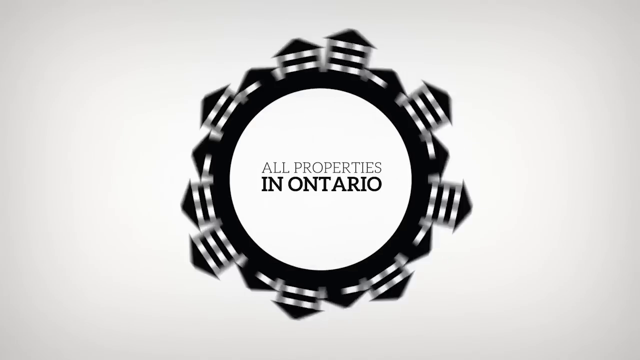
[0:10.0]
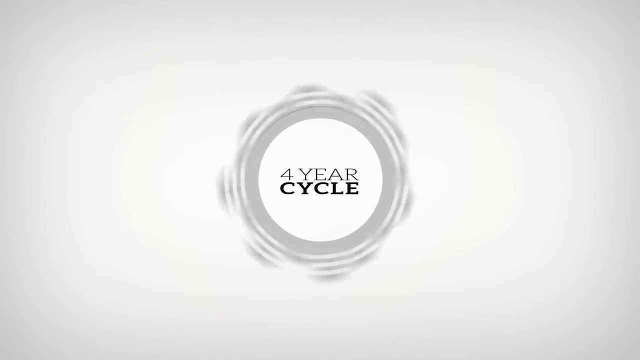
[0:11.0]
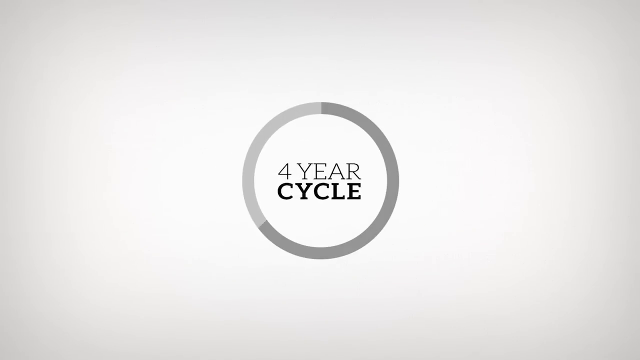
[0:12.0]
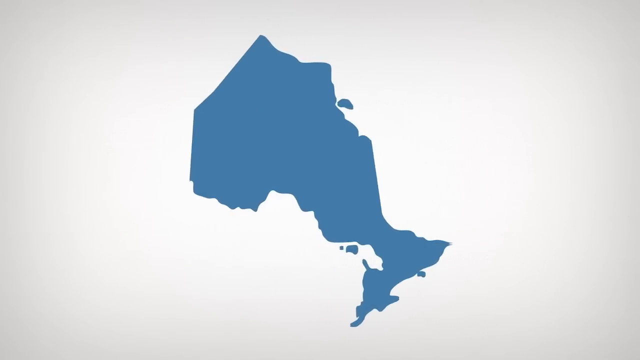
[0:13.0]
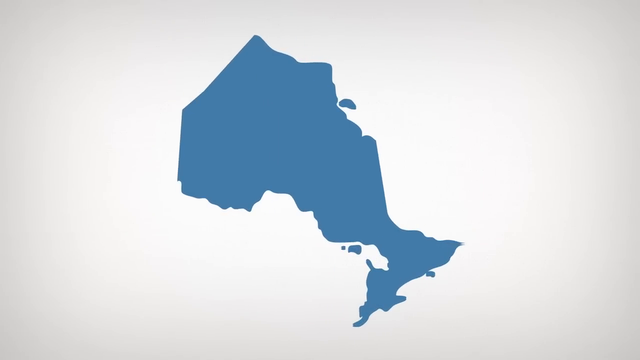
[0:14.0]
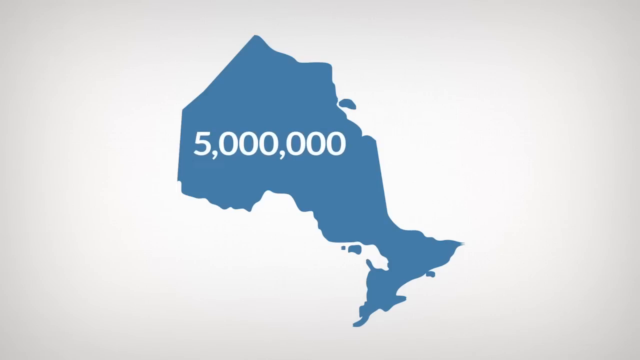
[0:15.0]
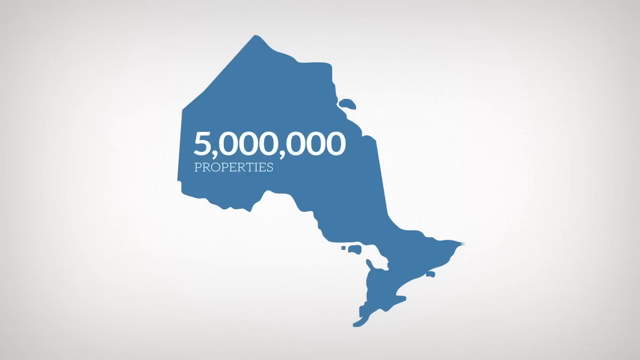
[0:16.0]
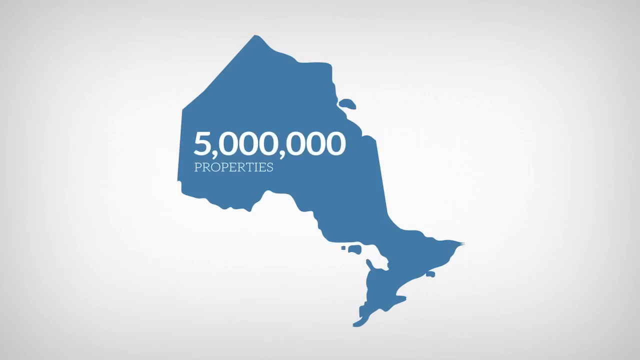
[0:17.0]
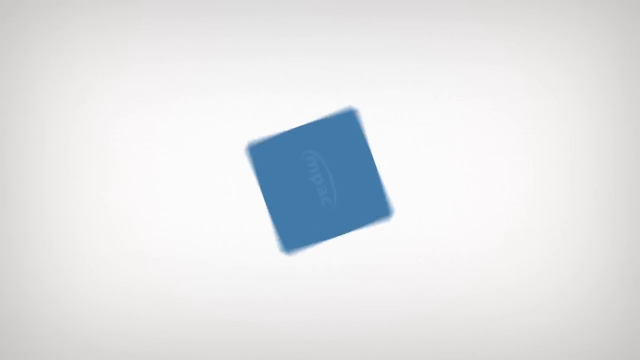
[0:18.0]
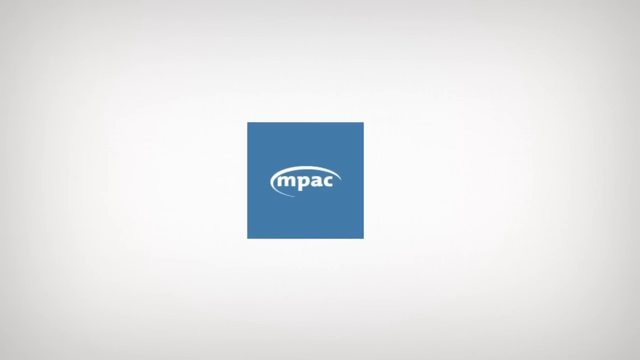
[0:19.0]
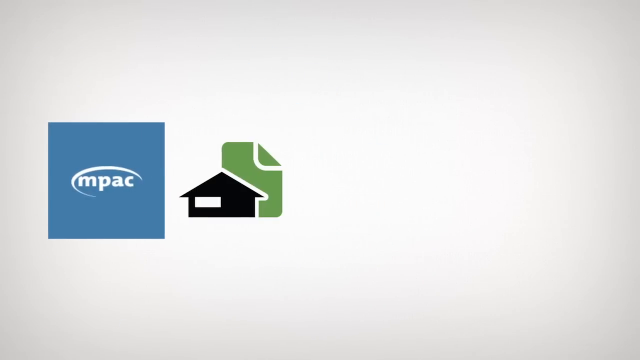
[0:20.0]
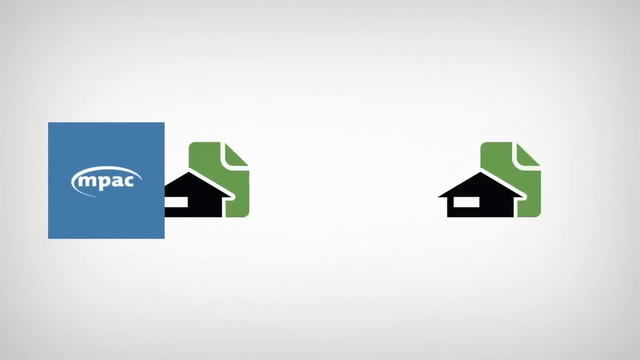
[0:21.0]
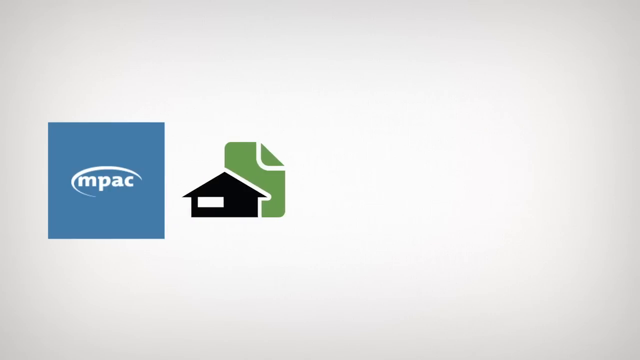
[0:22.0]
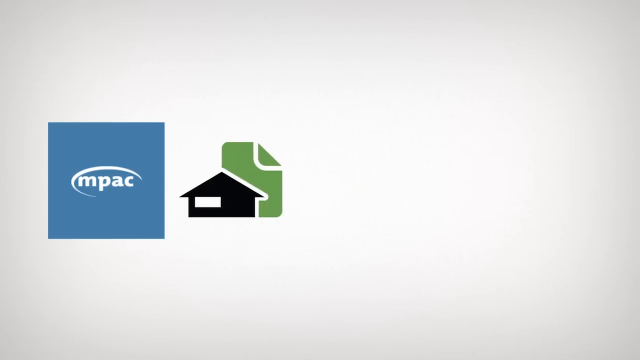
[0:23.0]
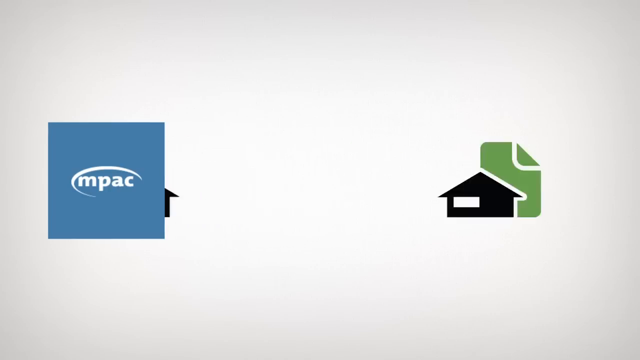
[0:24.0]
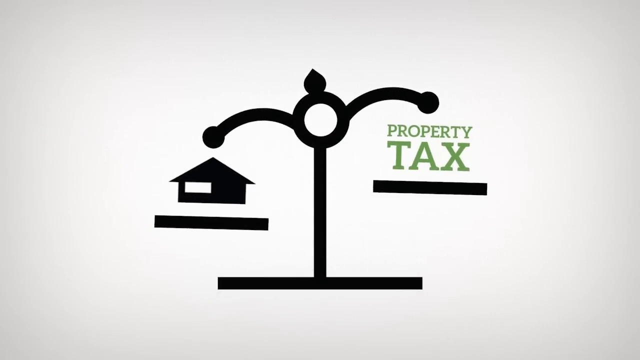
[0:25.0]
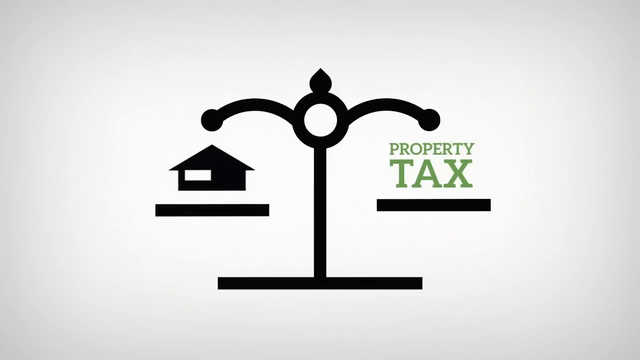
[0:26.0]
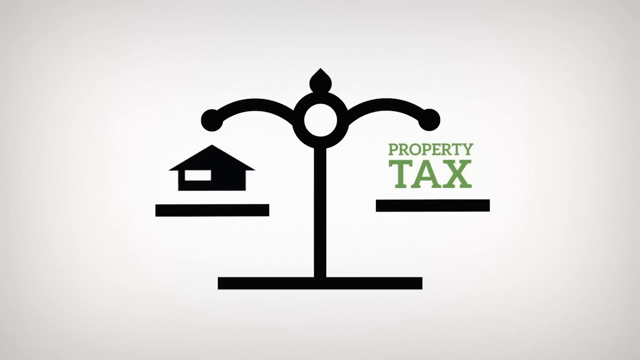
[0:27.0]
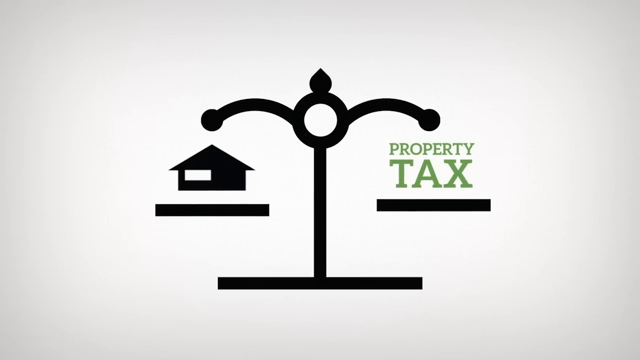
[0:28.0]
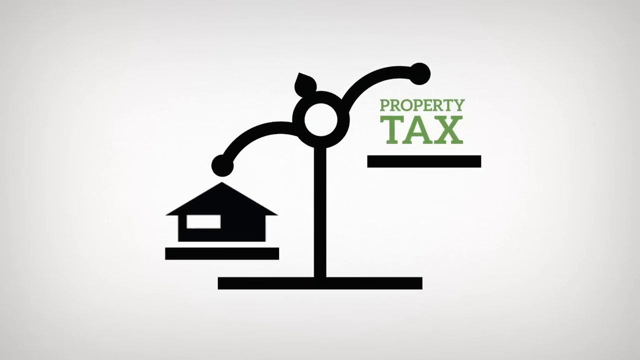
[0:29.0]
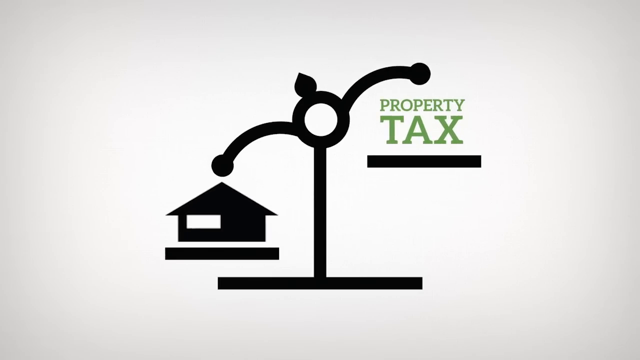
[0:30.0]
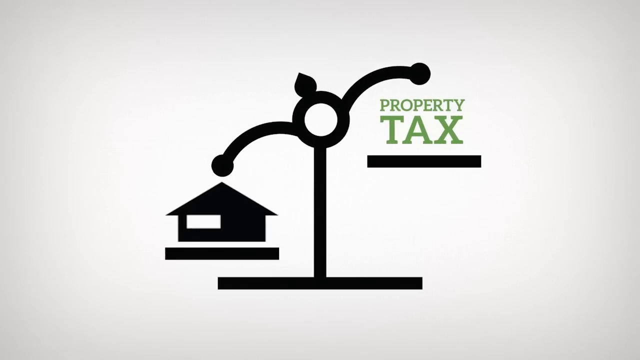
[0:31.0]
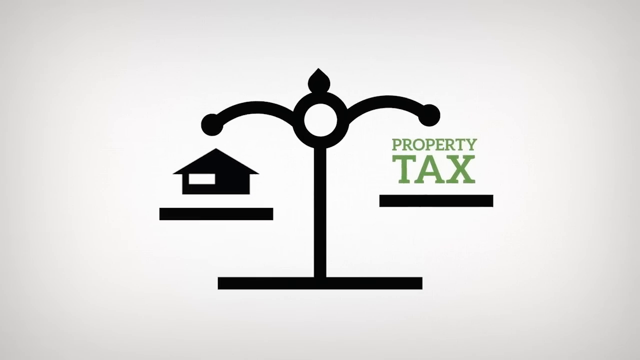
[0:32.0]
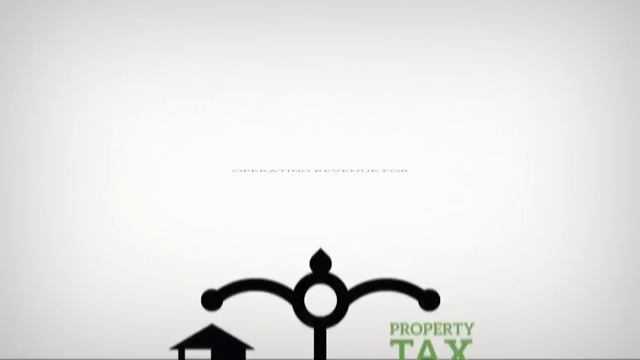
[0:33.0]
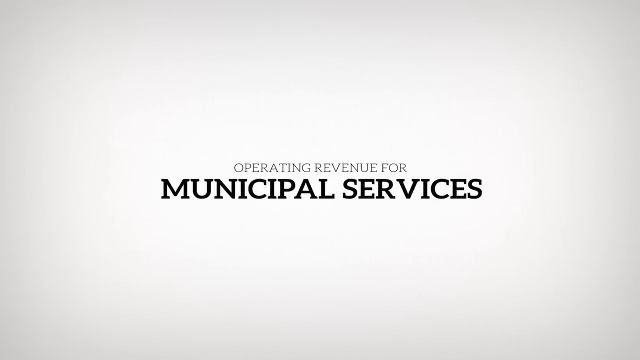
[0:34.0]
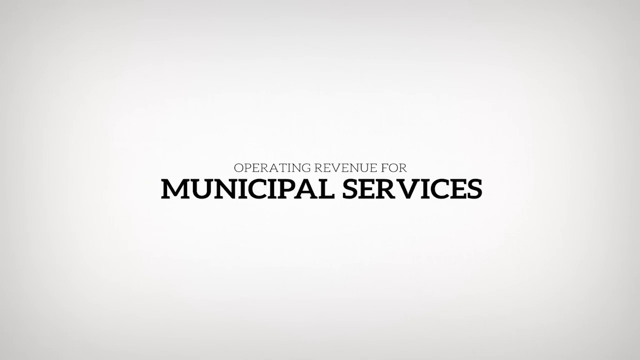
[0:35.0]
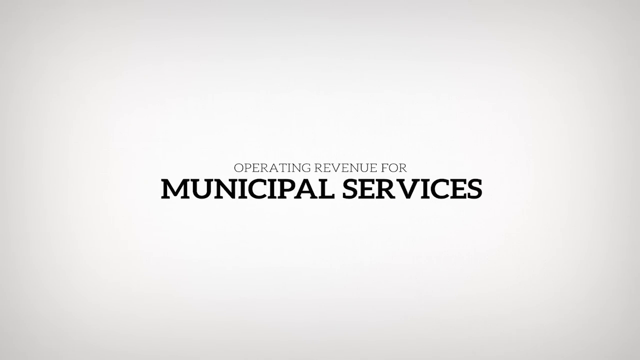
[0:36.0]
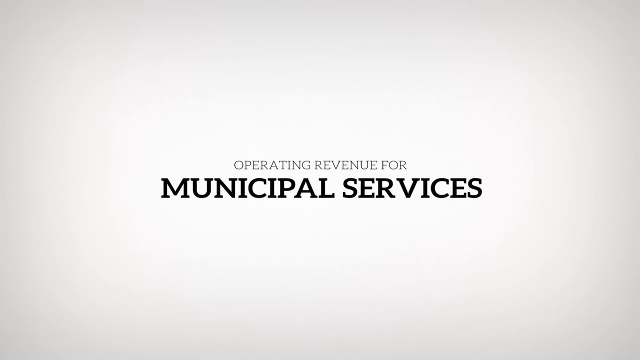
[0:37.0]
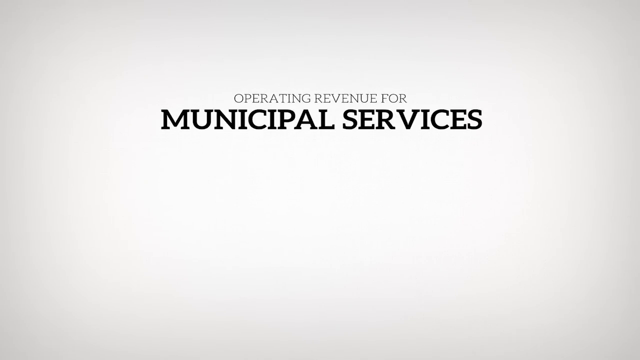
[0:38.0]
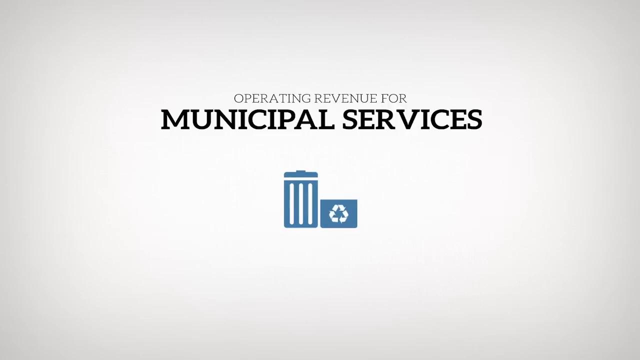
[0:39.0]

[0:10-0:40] A white circle reads "all properties in Ontario" and is surrounded by a black ring entirely covered with the outlines of various houses, which spin around the ring. Through an animation the image changes, and the text within the circle now reads "four-year cycle". The image becomes a simple circle, partly light grey and partly medium grey; the medium grey outline eventually consumes the entire circle. The image then changes into the outline of what looks like a blue 2D image of a map, province, or landmarks. On top of the blue map, the text "5 million" appears in numerals, and underneath it, in smaller all-caps letters, "properties".